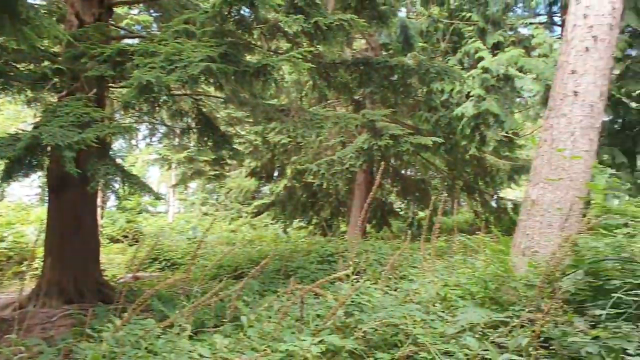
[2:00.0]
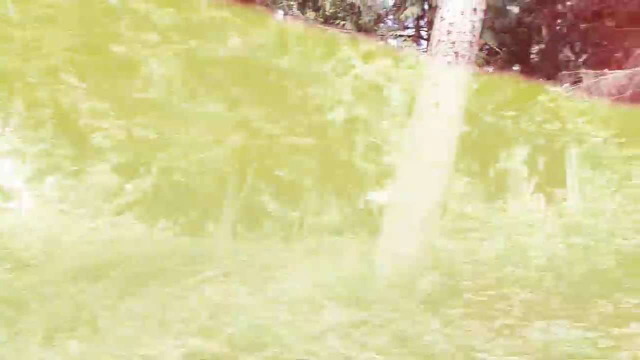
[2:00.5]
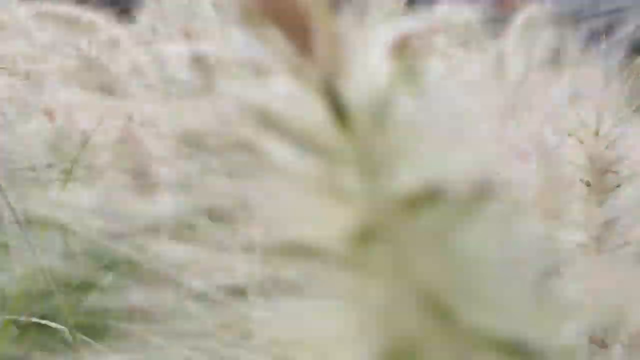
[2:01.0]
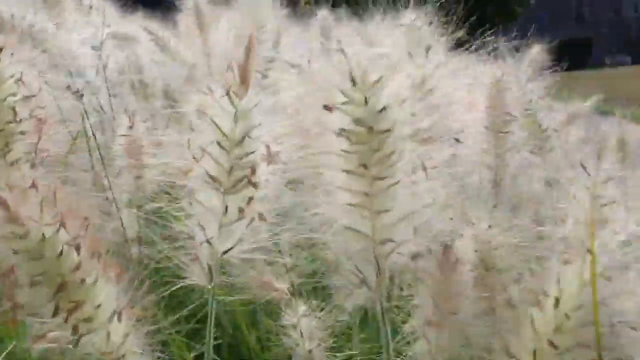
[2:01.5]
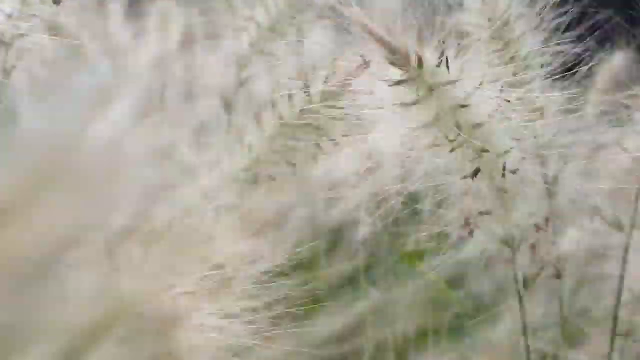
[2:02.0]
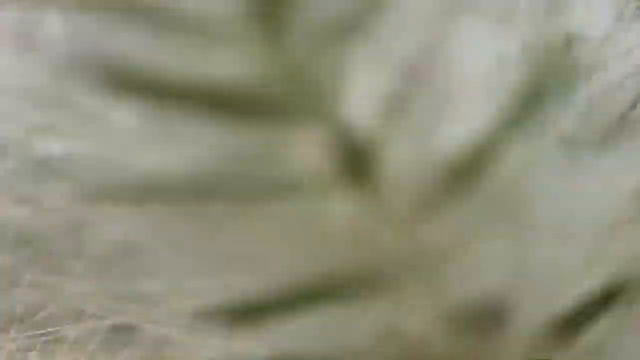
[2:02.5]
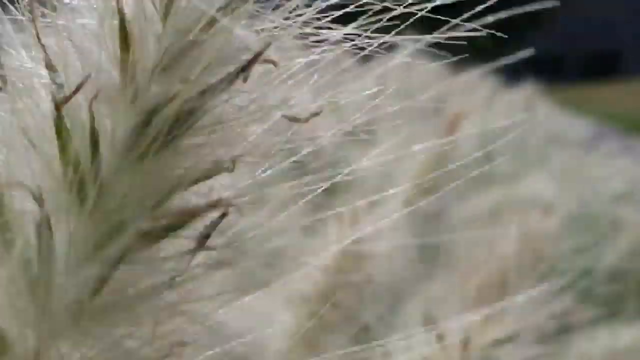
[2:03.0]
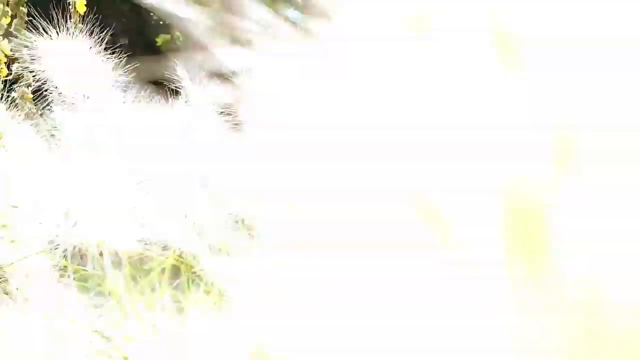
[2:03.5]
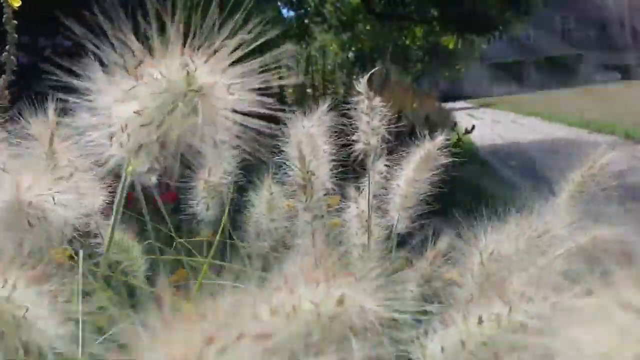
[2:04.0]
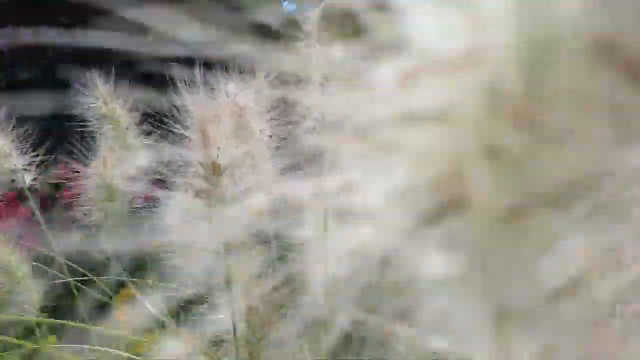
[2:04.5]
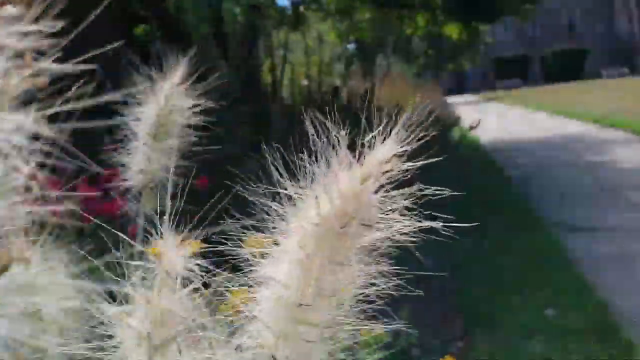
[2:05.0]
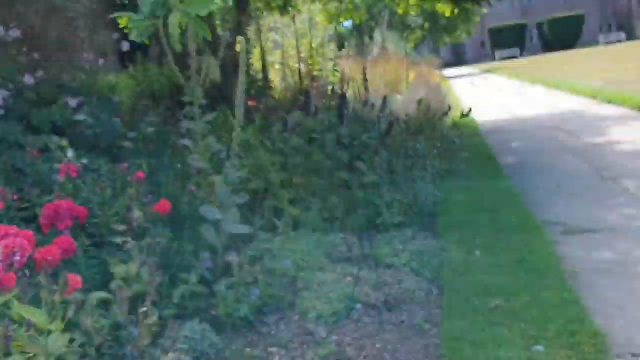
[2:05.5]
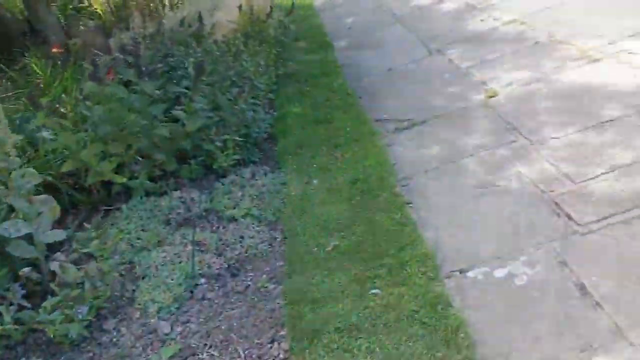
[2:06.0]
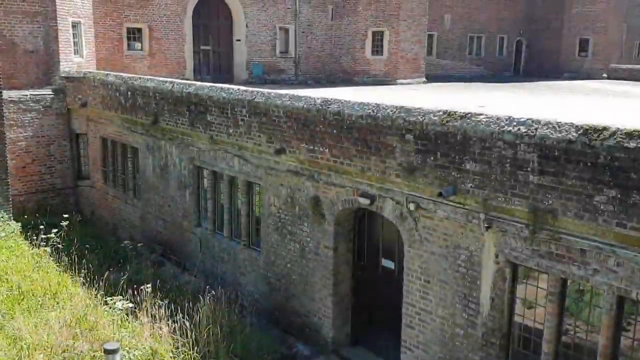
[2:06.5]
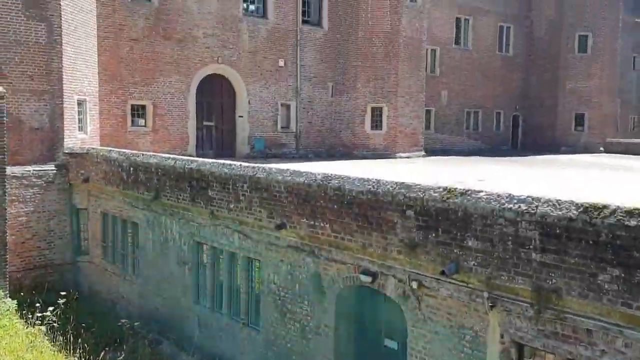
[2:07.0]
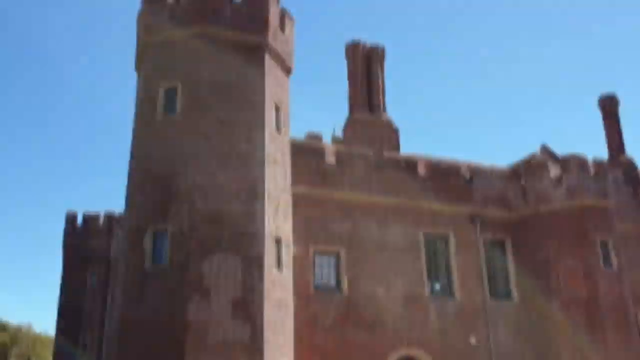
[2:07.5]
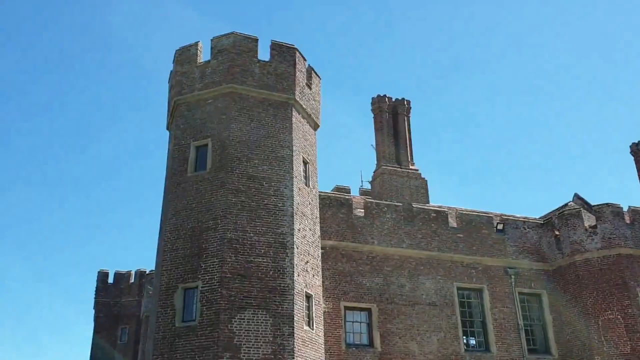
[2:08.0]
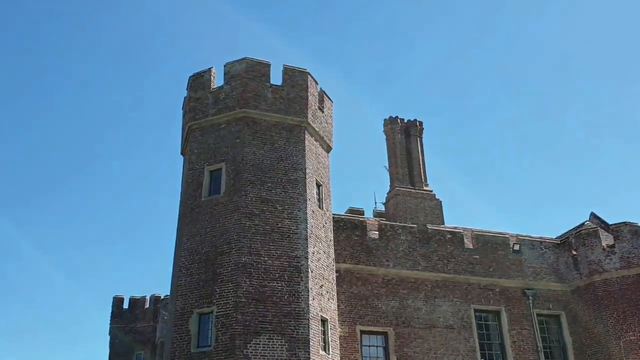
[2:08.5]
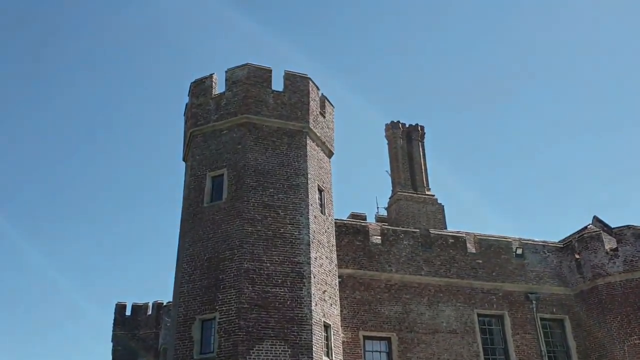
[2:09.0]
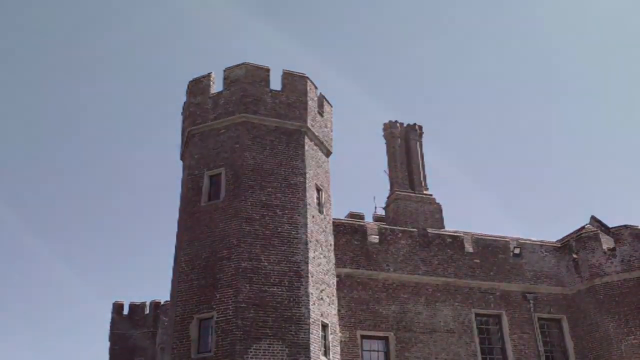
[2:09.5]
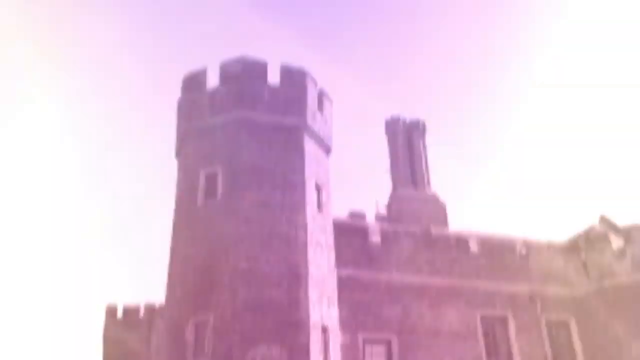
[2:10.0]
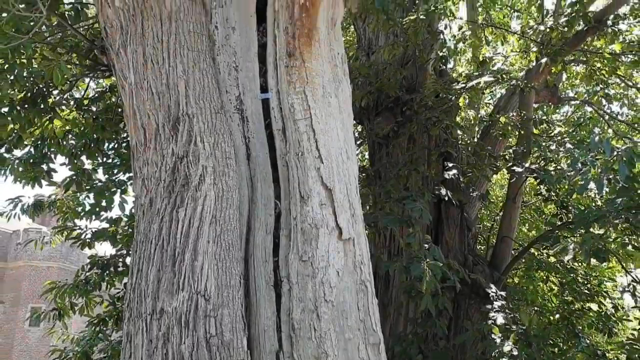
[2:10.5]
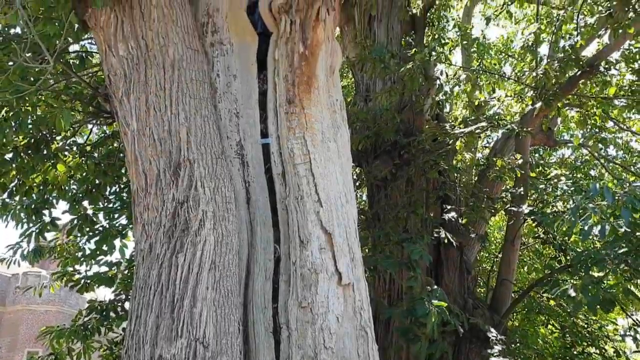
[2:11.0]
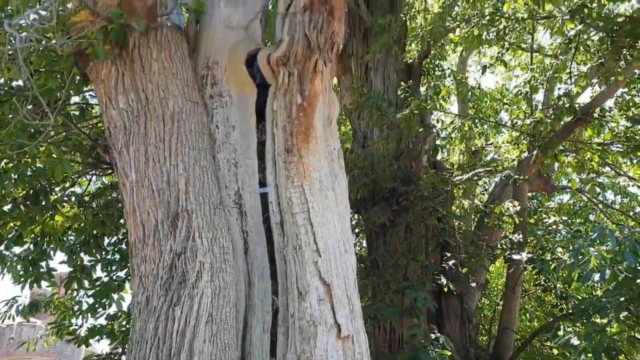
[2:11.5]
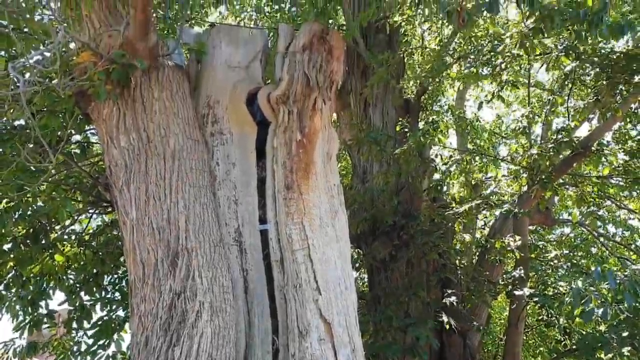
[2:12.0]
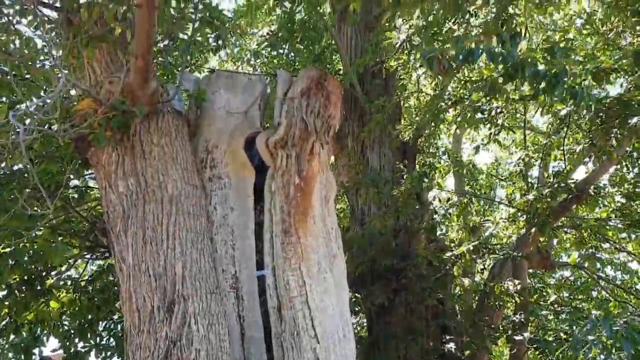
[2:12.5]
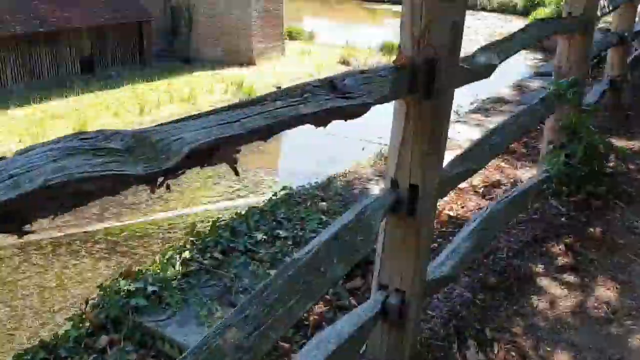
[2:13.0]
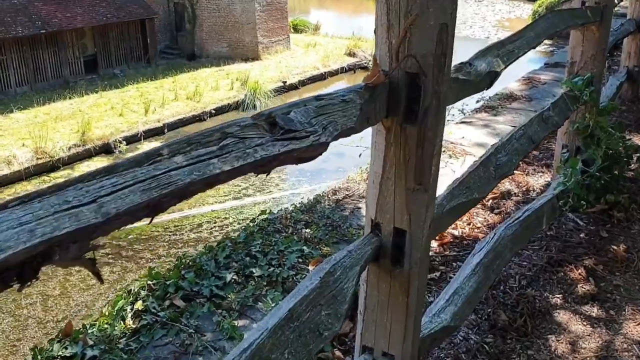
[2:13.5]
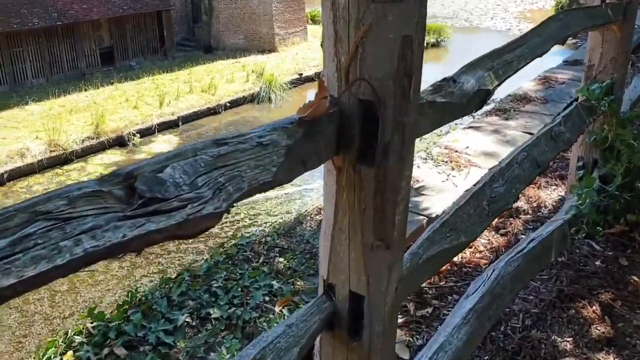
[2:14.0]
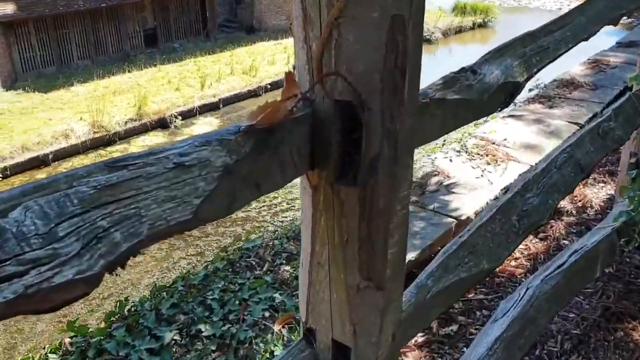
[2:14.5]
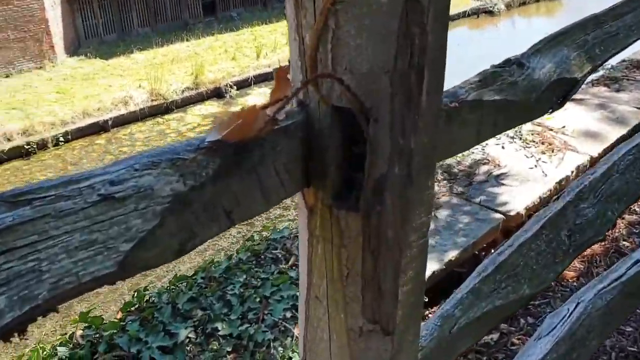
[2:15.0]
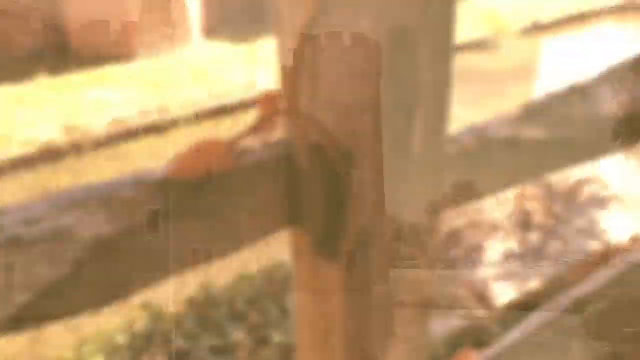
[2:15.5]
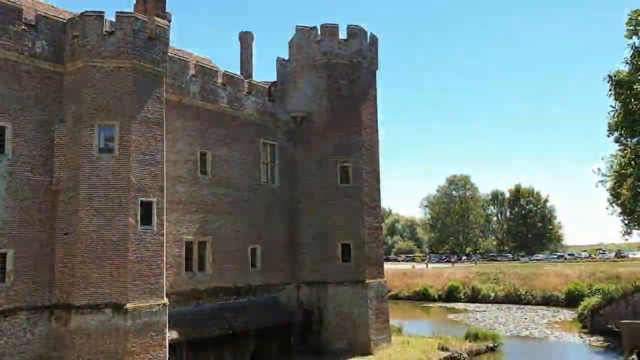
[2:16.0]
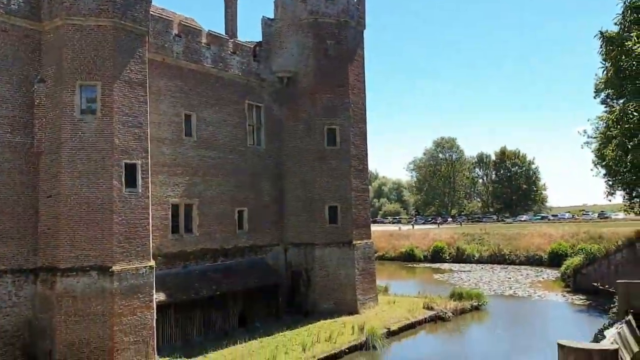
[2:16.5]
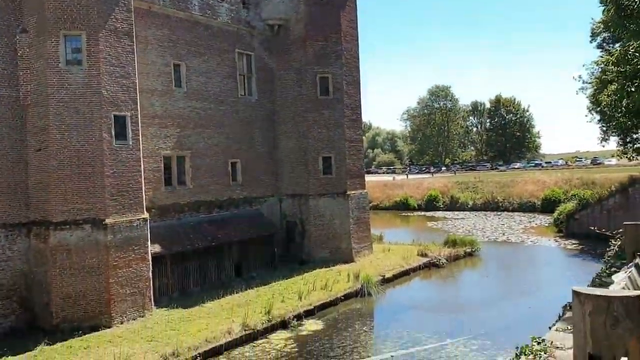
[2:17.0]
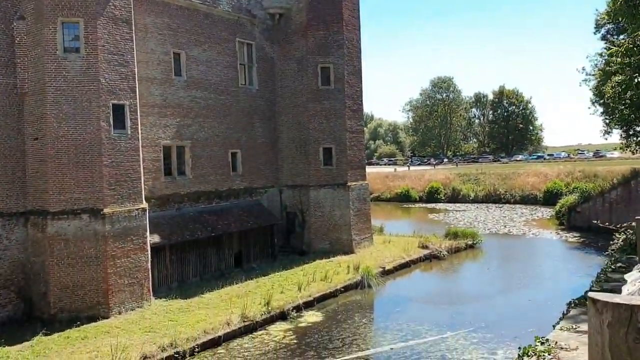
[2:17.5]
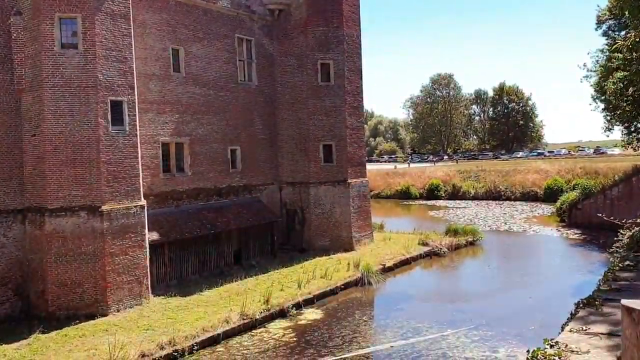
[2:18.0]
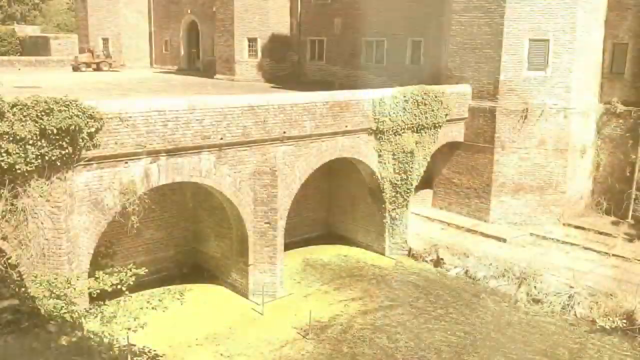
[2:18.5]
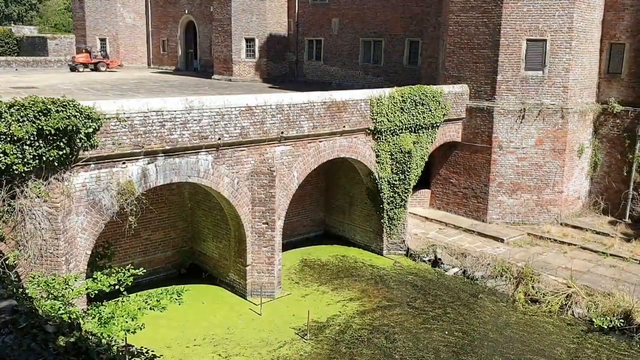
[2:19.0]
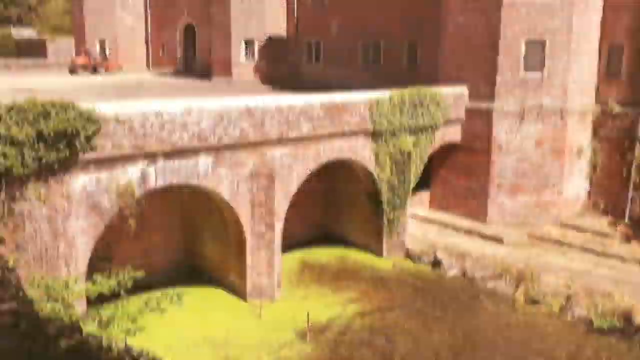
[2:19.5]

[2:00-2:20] The woodland walk continues with different plants, including close-ups of some sort of waving grasses. Exterior shots of the castle follow, including the moat, which has green algae on it, and then areas with trees and close-ups of trees. The camera work looks handheld rather than the more formal style used earlier.